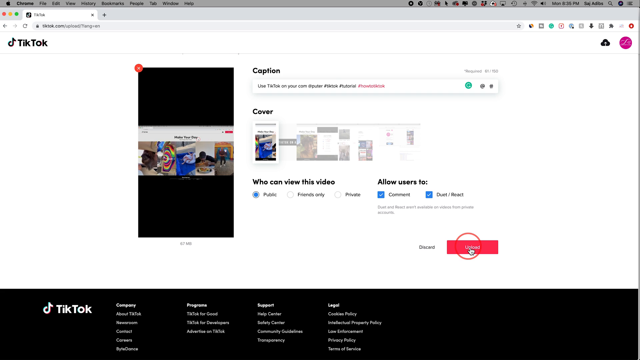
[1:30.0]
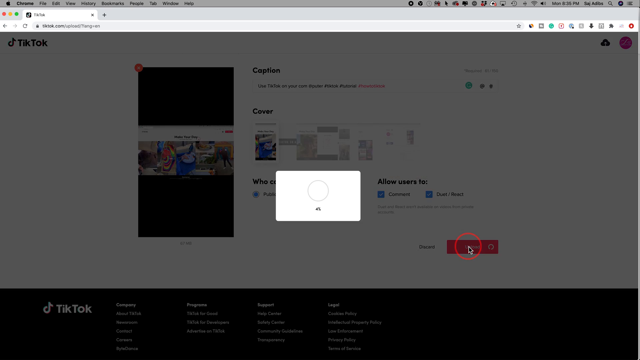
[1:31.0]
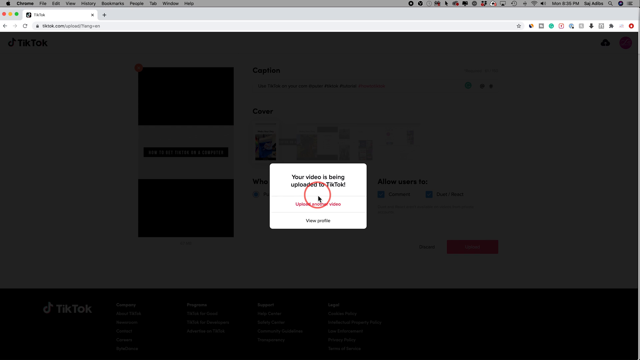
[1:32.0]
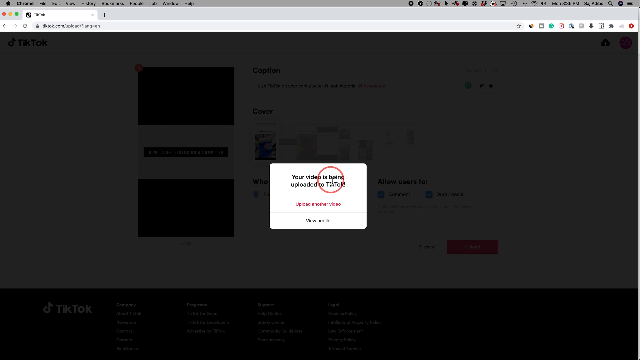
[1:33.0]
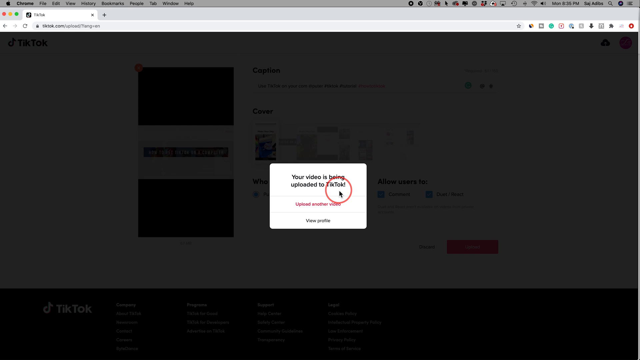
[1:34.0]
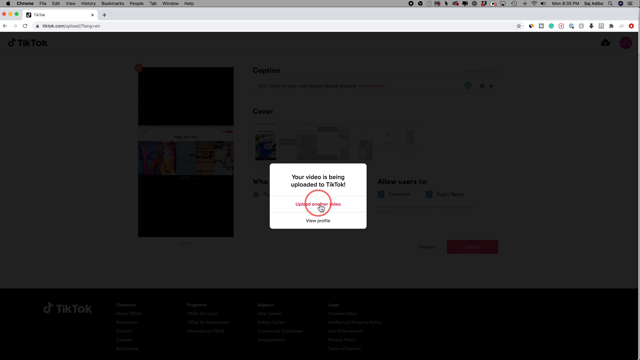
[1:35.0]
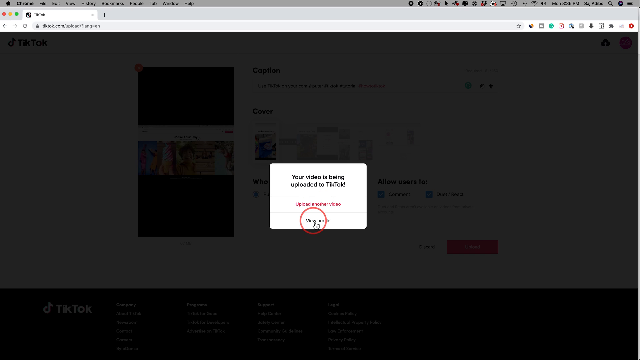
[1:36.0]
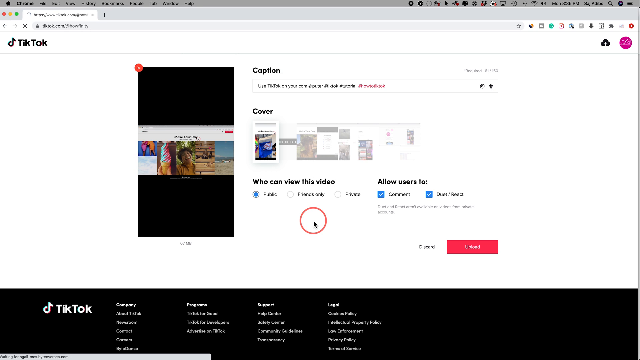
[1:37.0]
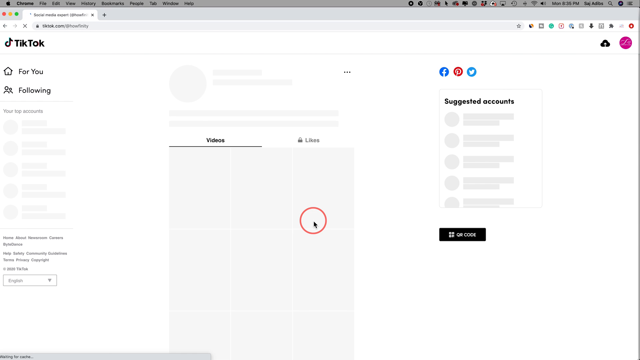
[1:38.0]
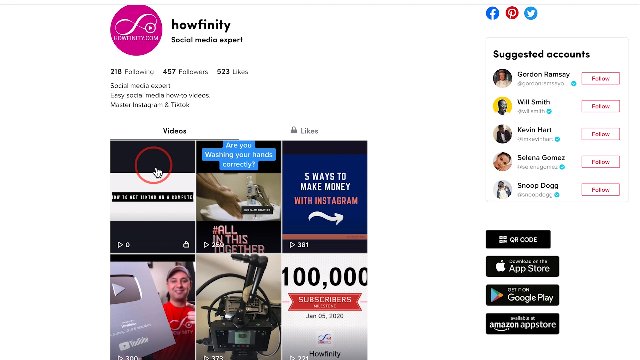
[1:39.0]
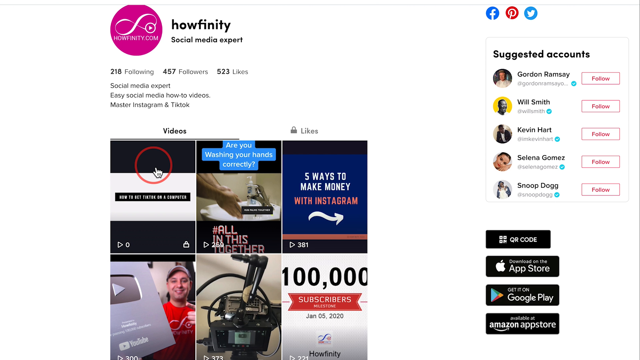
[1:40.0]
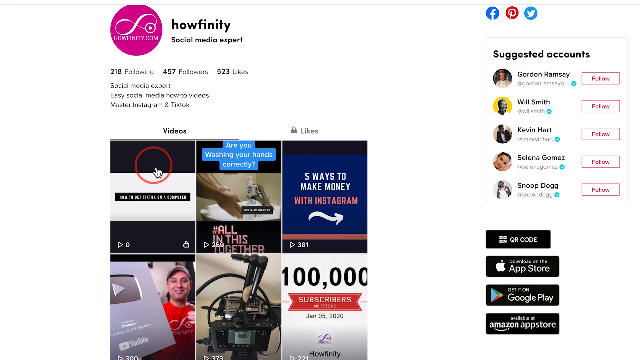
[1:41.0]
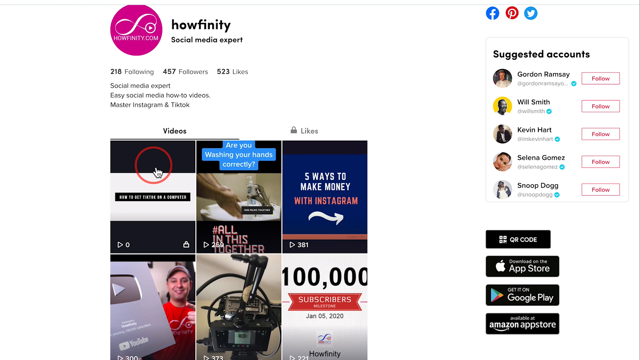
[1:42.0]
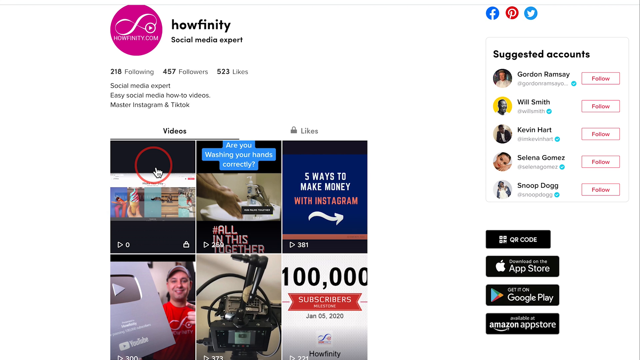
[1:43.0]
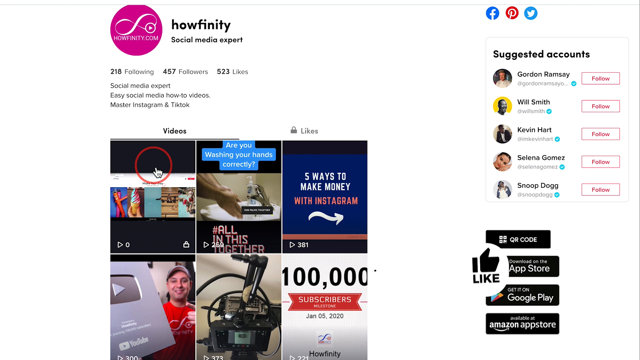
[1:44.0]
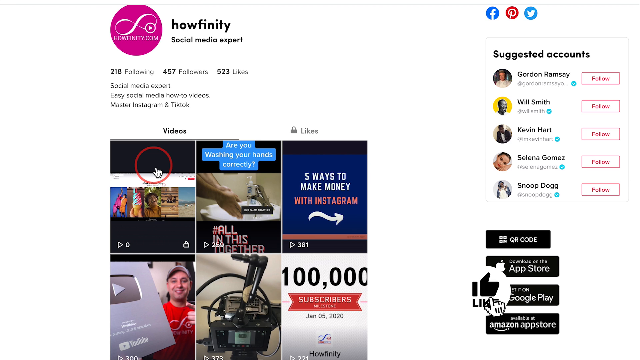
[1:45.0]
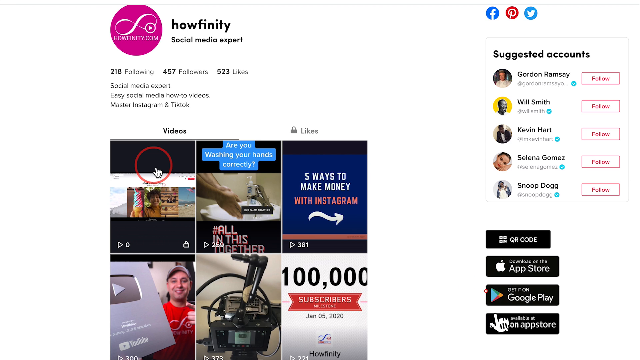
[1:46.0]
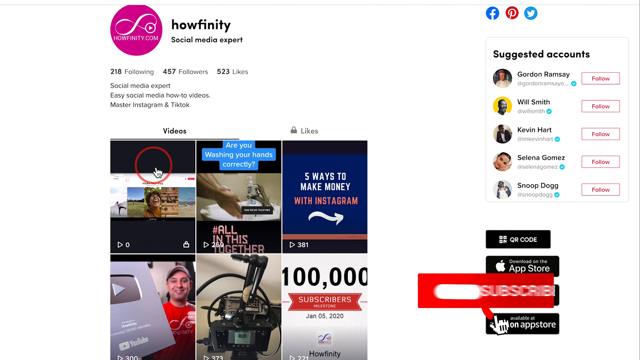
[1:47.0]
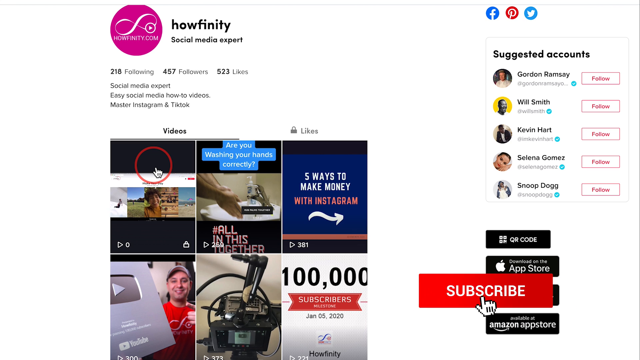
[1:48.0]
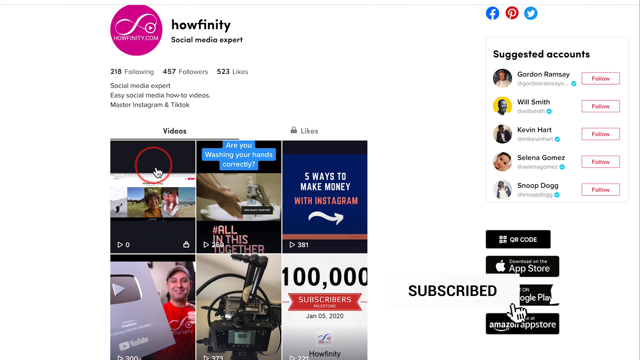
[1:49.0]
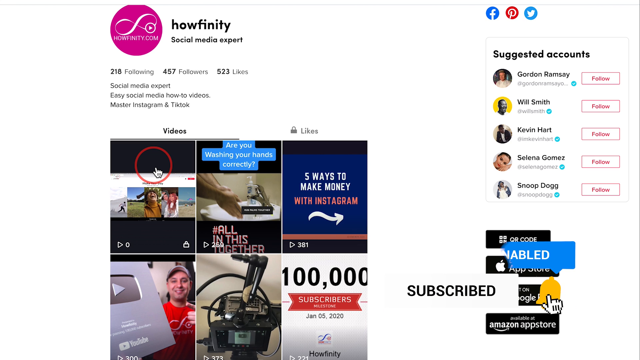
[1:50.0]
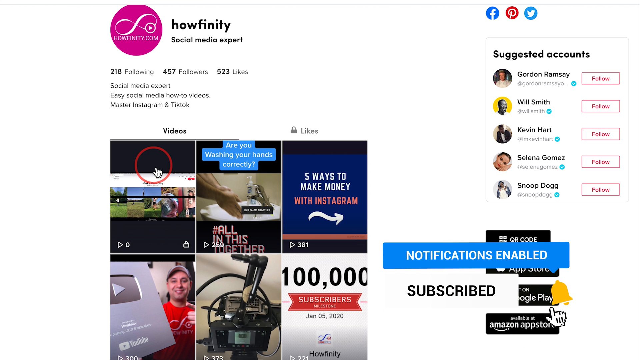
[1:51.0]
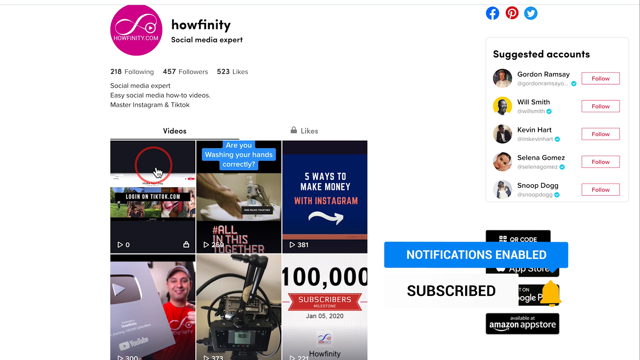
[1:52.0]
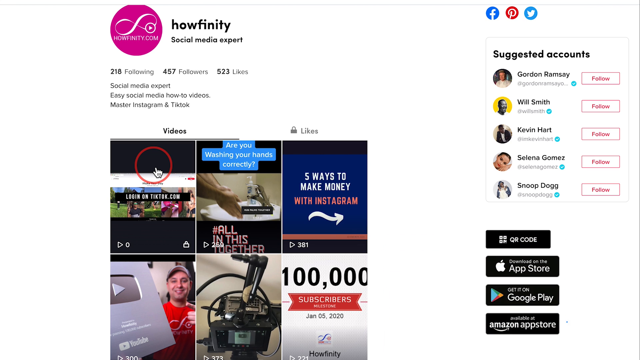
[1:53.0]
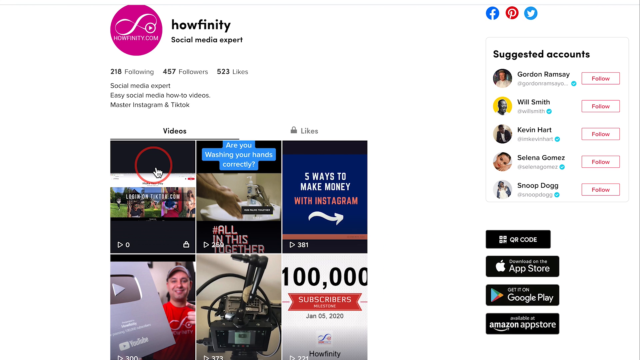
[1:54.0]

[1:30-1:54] Clicking the upload button brings up a white box with a circular loading bar; when it fills up, it disappears and the text says "your video is being uploaded to TikTok." The cursor hovers over that text, then briefly over the options "upload another video," in pink, and "view profile." View profile is clicked, leading to the TikTok profile page of Howfinity, social media expert. In the upper left corner is the bright pink Howfinity logo, an infinity sign with a play button next to it, with "Howfinity.com" in white underneath. Next to the logo it says "Howfinity" and then "social media expert." Below are the counts: 218 following, 457 followers, 523 likes. Under those it says "social media expert, easy social media how-to videos, master Instagram and TikTok." Beneath that are a videos tab and a likes tab, and the likes tab is locked. At the upper right of the page are the Facebook, Pinterest and Twitter logos. Beneath them is a suggested accounts list of Gordon Ramsey, Will Smith, Kevin Hart, Selena Gomez and Snoop Dogg, each with a rectangular pink follow button next to it, and under that window are a QR code and options to download on the App Store or get it on Google Play and the Amazon app store. Under the videos and likes tabs is the just-uploaded video of the TikTok front page. Next to it is a video that asks "are you washing your hands correctly?" showing a person's hands being washed in a sink, with "all in this together" underneath. The next video has white text on a blue background reading "five ways to make money," with "with Instagram" in pink text below and a wavy arrow pointing right under that. In the next row, a man wearing a baseball cap and a red shirt holds a silver YouTube play button; to the right is some kind of camera contraption, and the last video shows "100,000" with a red banner reading "subscribers milestone, January 5, 2020." A call to action then appears in the bottom right corner with like and subscribe buttons. The cursor clicks the like button, making it go away; a circle then appears and transforms into a red rectangle with the word "subscribe." The cursor clicks the red rectangle, which turns into a white rectangle with the word "subscribe," a bell appears beside it, and a blue rectangle above it says "notifications enabled."